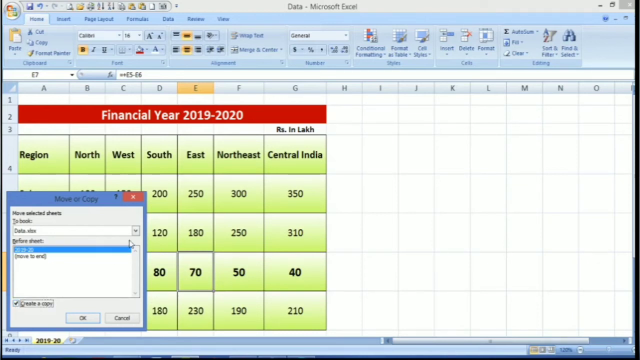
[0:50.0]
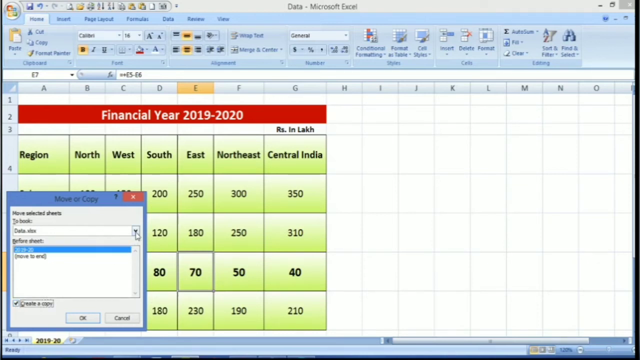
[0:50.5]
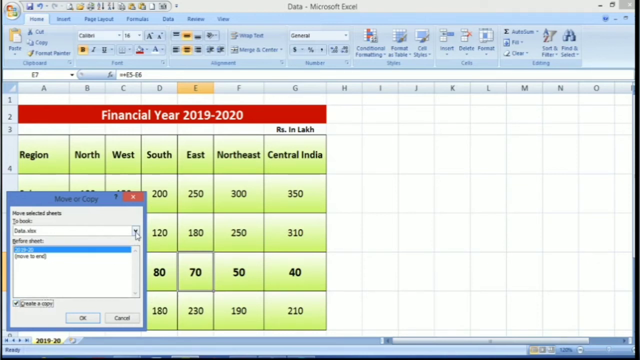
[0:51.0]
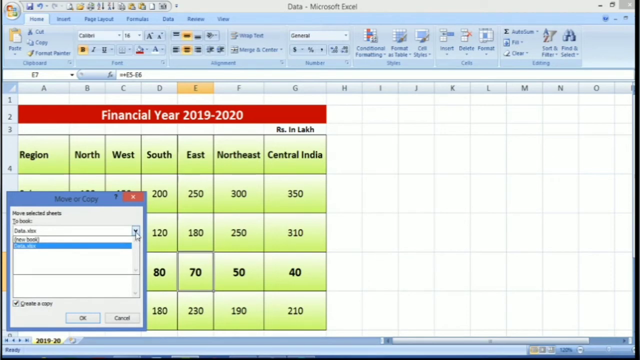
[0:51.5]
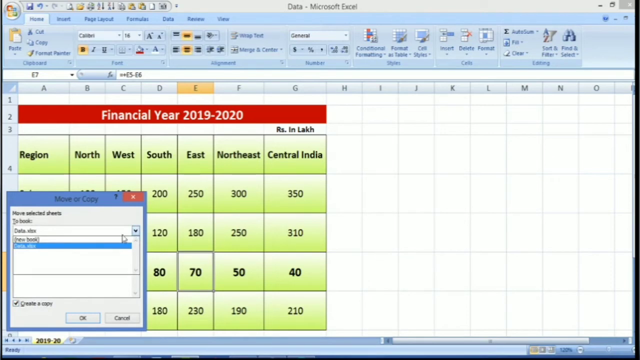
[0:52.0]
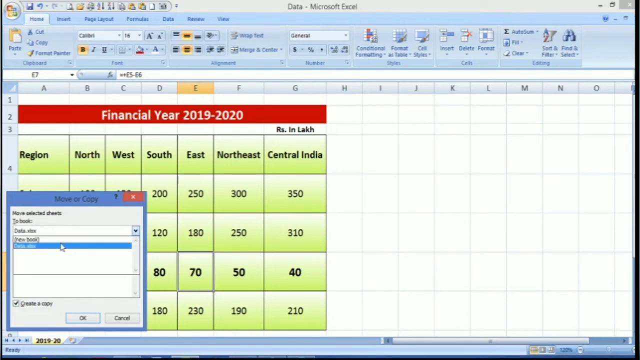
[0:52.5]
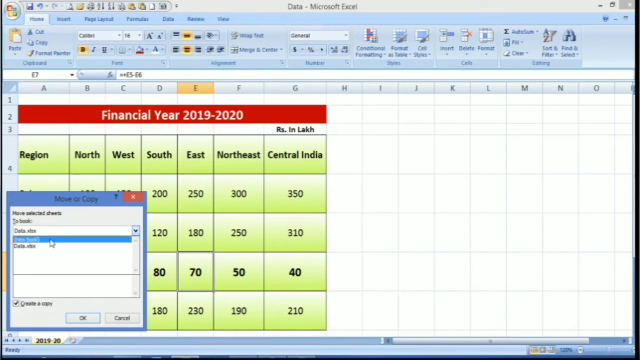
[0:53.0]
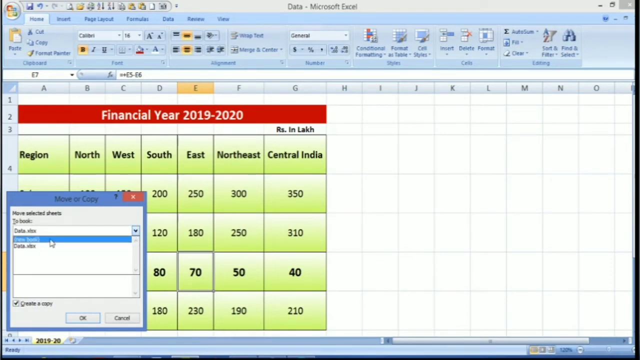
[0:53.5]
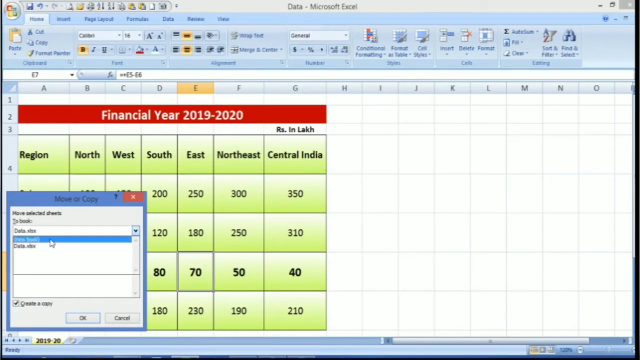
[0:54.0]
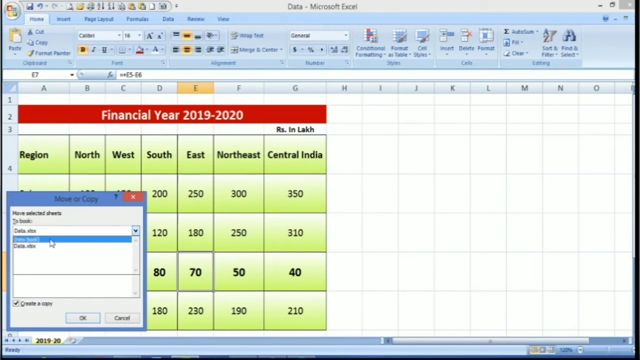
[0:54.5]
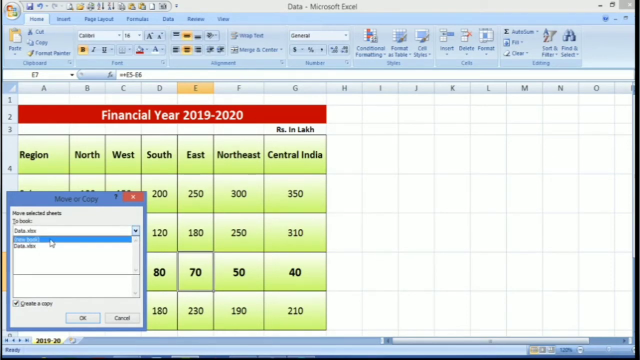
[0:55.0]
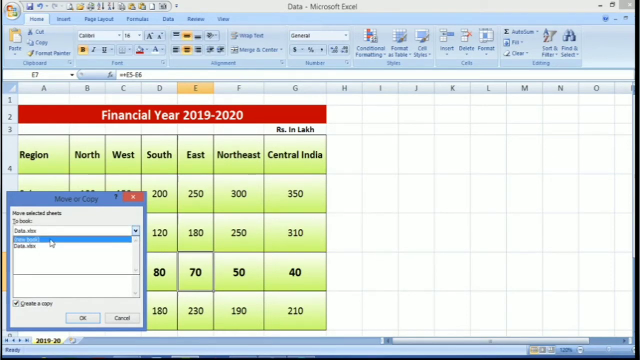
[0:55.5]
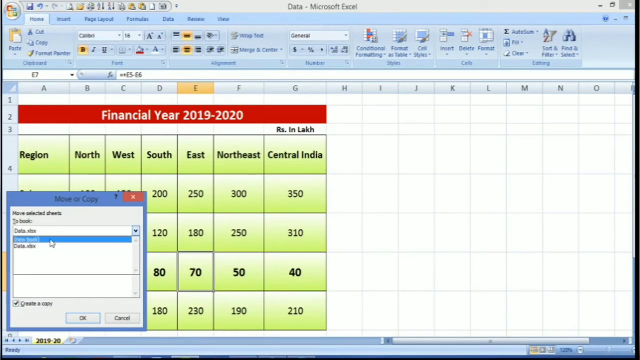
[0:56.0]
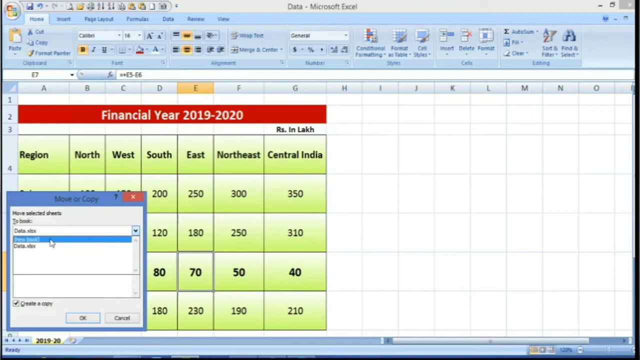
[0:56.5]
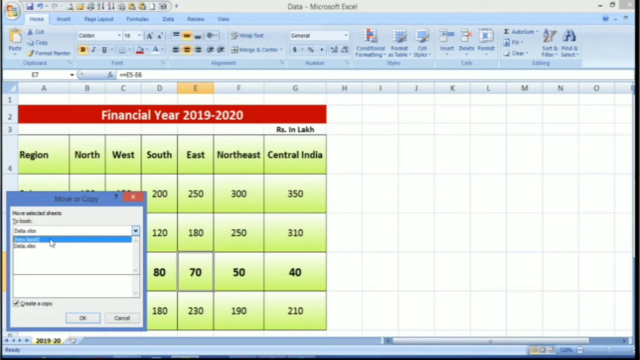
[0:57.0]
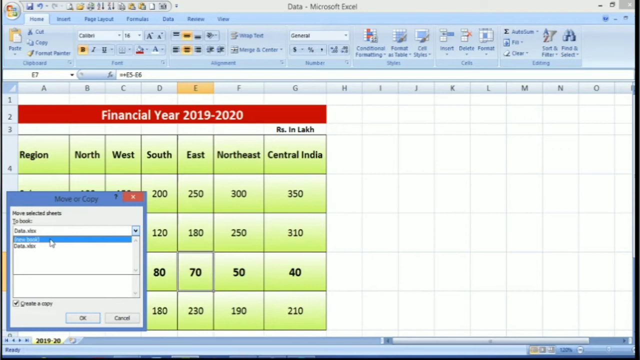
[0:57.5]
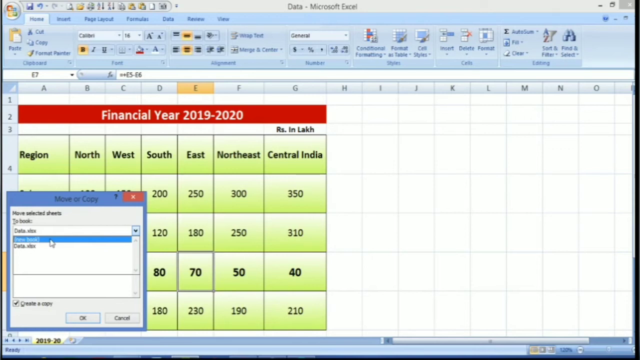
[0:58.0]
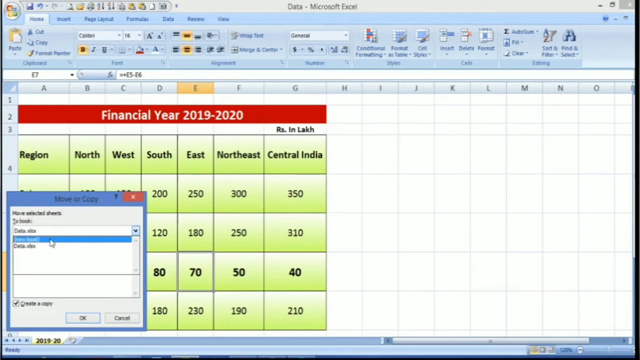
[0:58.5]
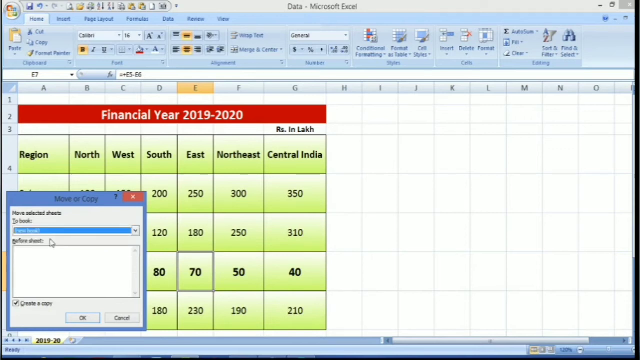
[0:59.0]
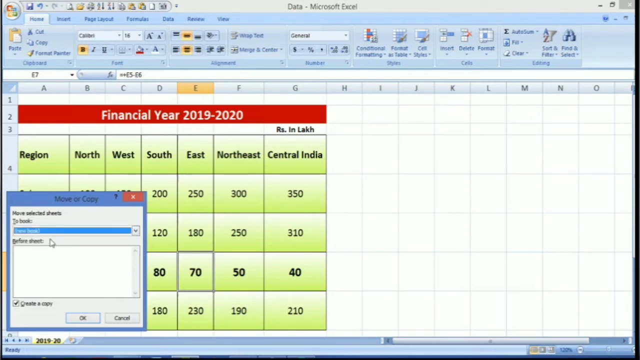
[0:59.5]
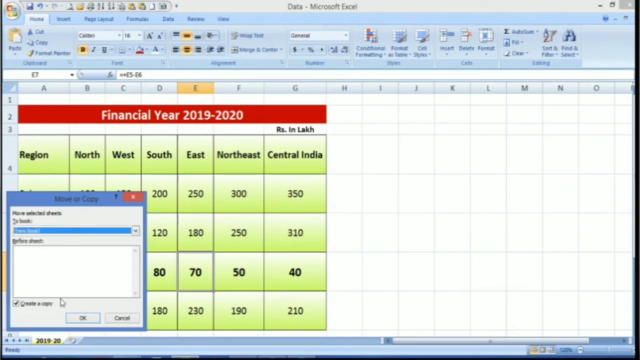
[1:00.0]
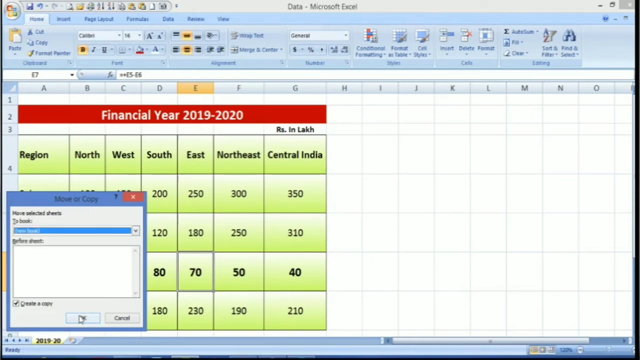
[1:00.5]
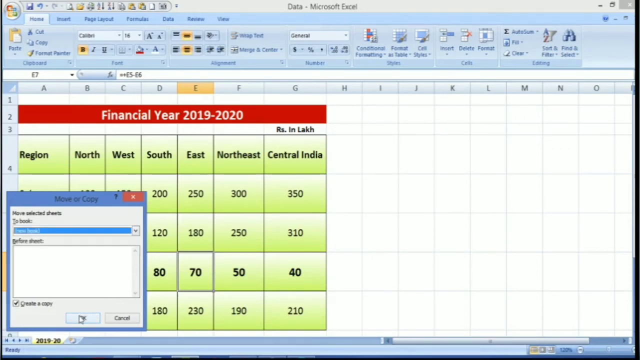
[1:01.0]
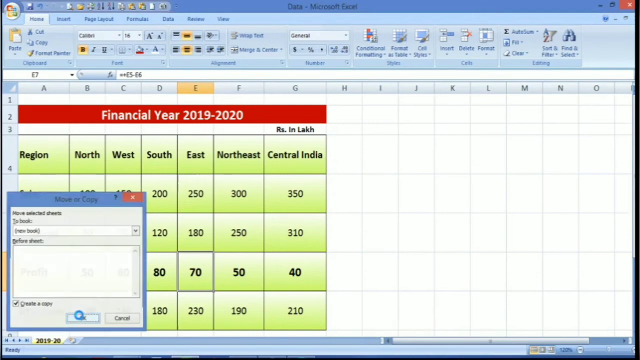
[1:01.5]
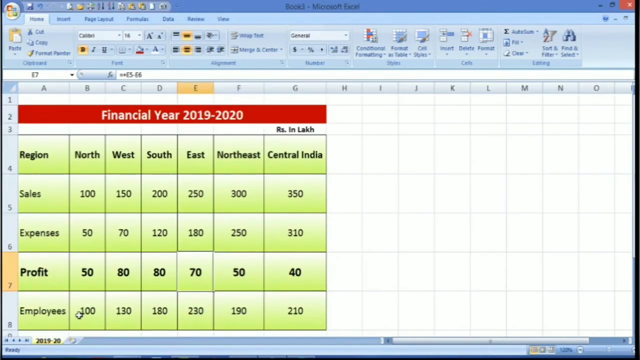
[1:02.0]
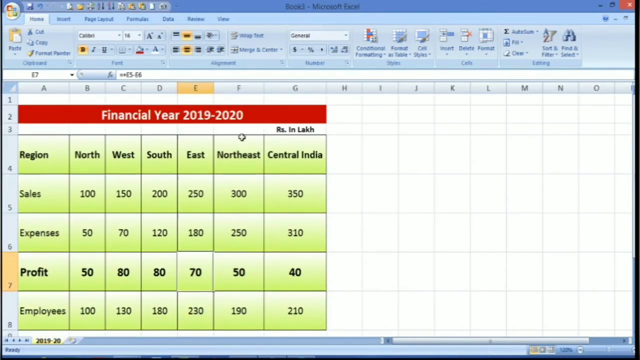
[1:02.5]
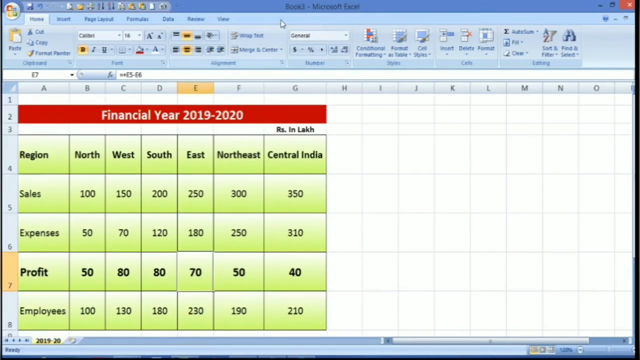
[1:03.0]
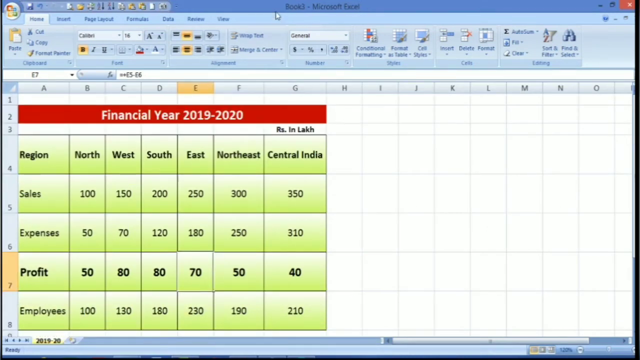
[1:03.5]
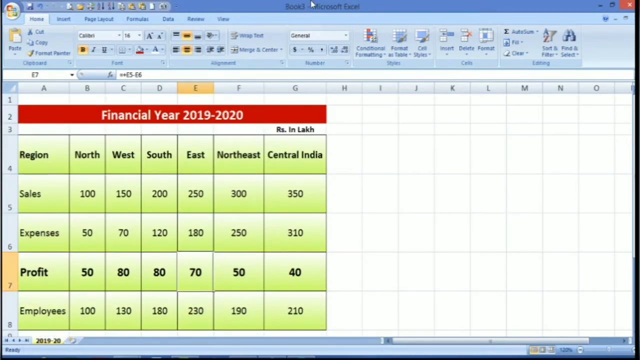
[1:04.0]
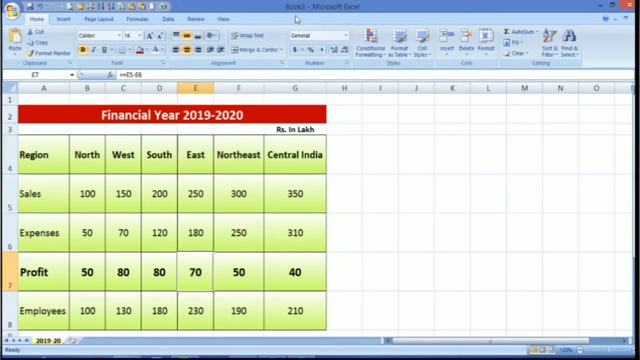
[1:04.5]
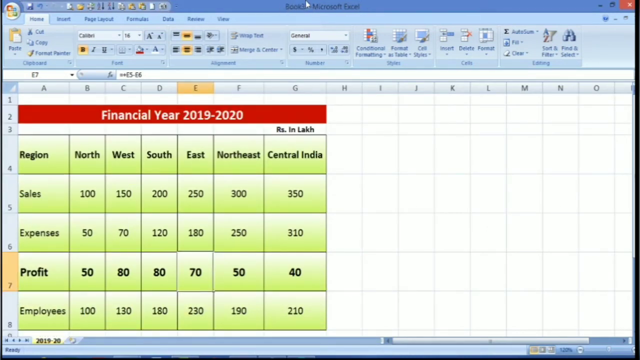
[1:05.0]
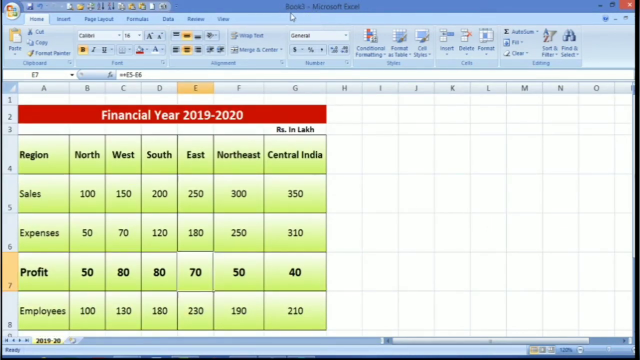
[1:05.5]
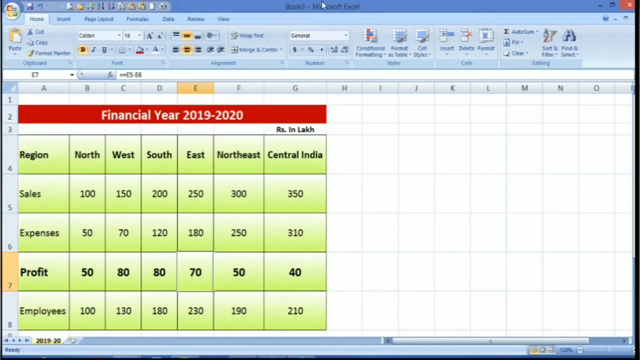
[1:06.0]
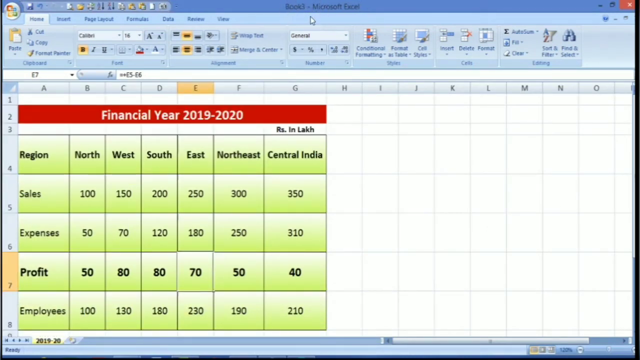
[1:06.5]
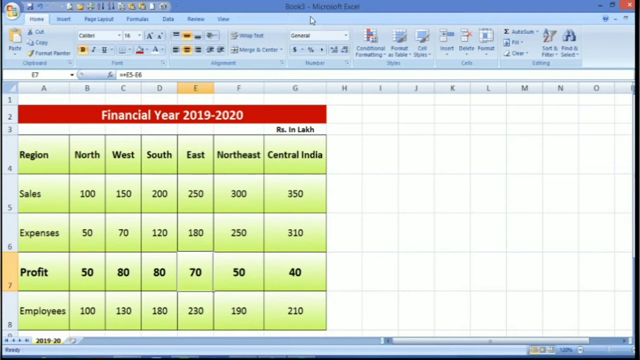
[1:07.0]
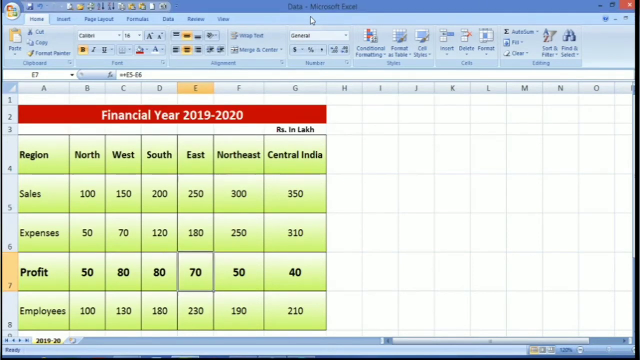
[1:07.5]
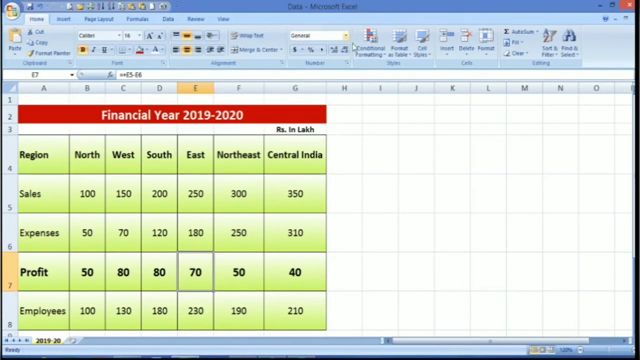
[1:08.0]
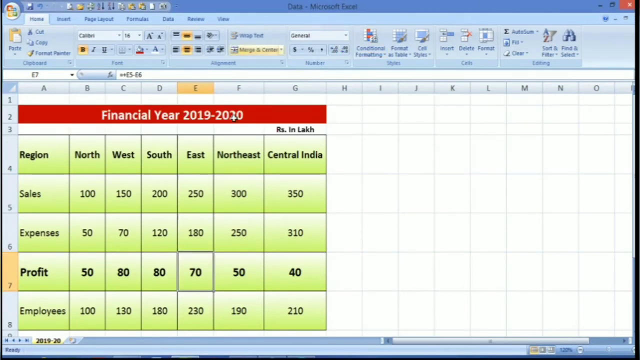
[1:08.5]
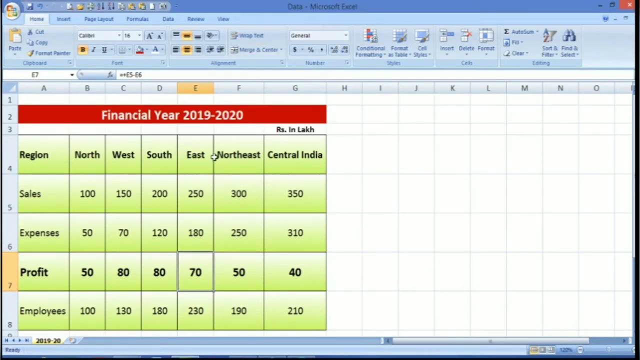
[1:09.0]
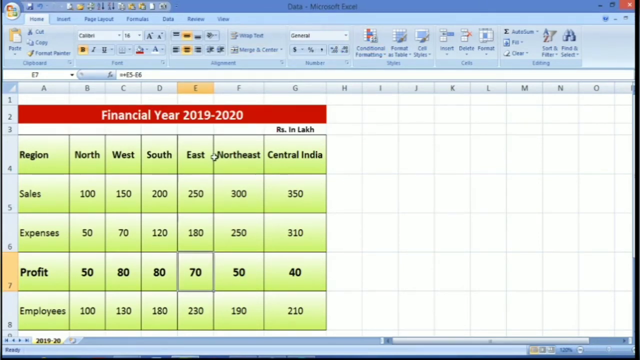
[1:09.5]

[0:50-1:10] The video, slightly wider than it is tall, shows a Microsoft Excel spreadsheet labeled "data" at the top. The Home tab is selected, with its normal buttons and options in the bar below. The worksheet is titled "financial year 2019 to 2020" in white text on a red background. Below that is a green chart with columns across the top reading region, north, west, south, east, northeast and central India. A window overlays much of the chart in the lower left corner, apparently a move or copy window. The same item is selected in it, though its text cannot be read, and "create a copy" is selected. OK is clicked, and the mouse goes up to the title bar area, making a clockwise motion encircling the title, which is "book three". The view then switches back to "data".